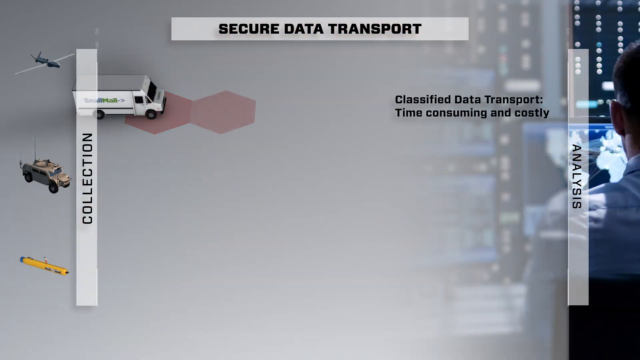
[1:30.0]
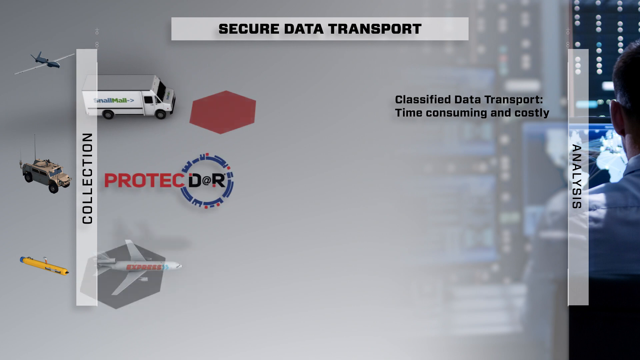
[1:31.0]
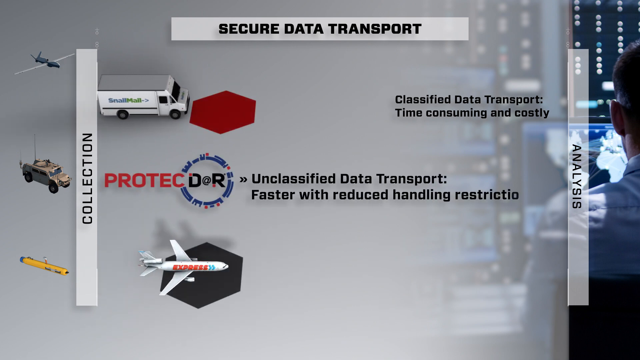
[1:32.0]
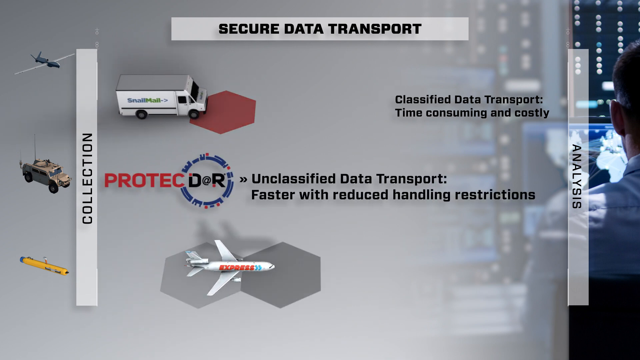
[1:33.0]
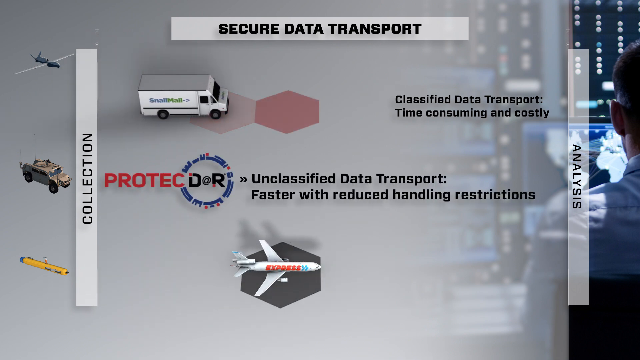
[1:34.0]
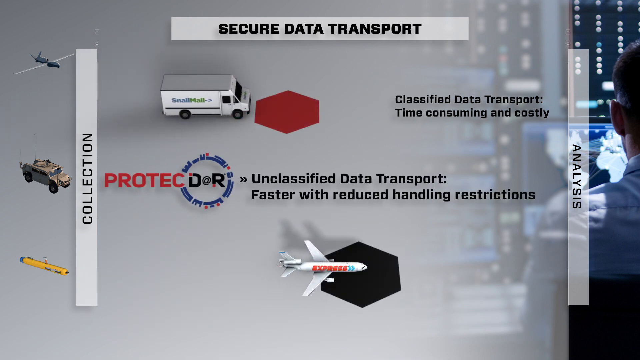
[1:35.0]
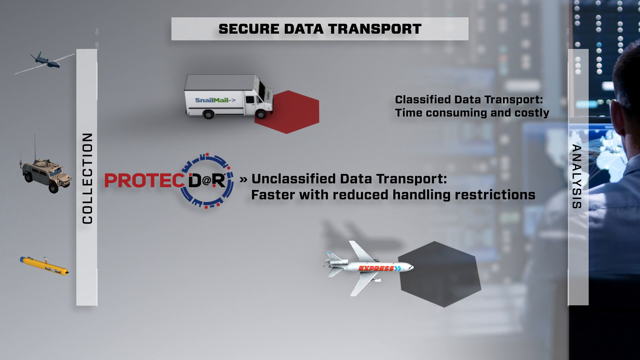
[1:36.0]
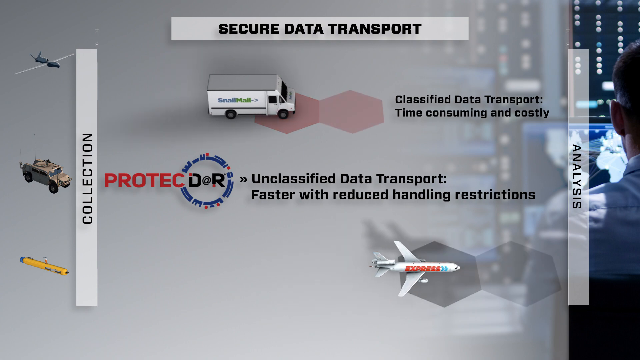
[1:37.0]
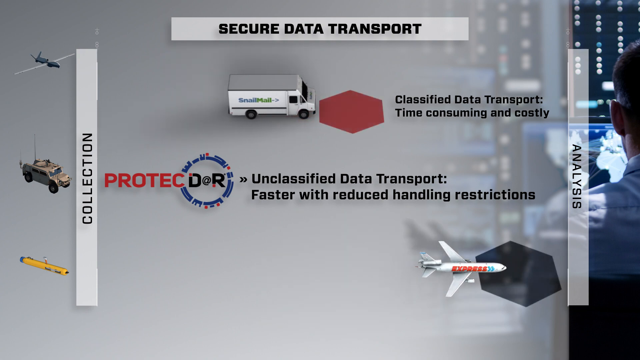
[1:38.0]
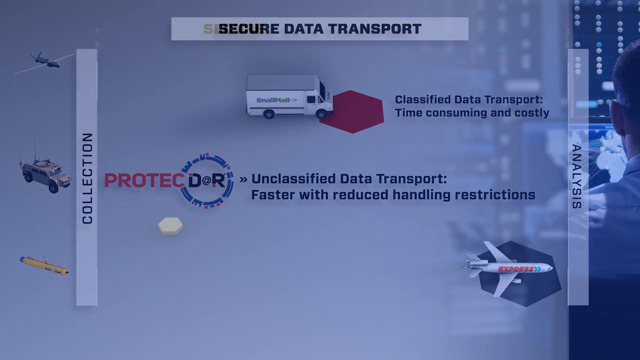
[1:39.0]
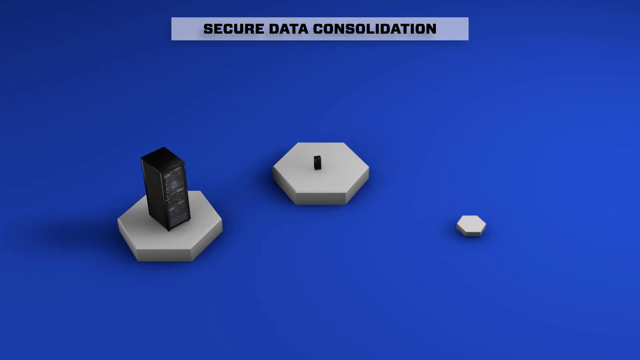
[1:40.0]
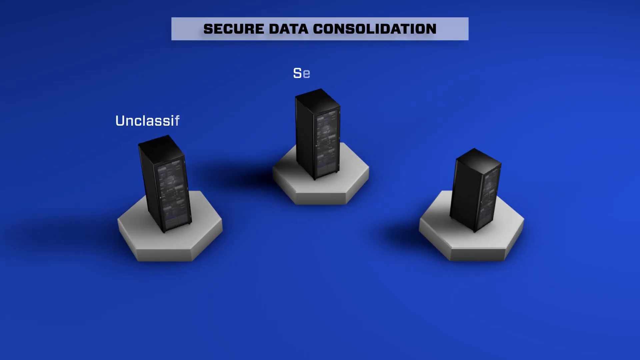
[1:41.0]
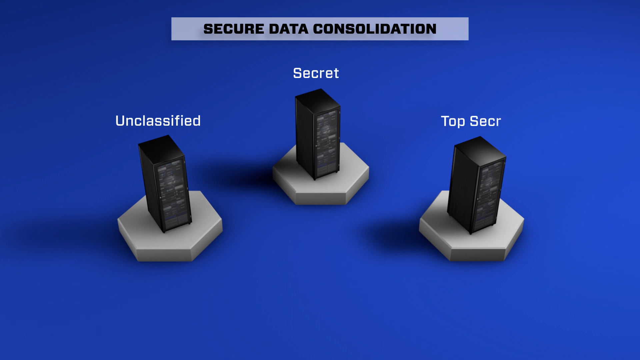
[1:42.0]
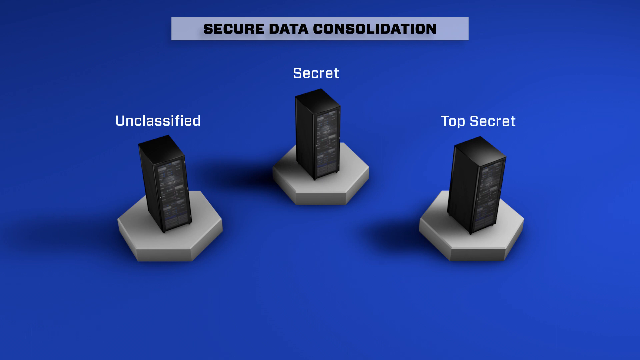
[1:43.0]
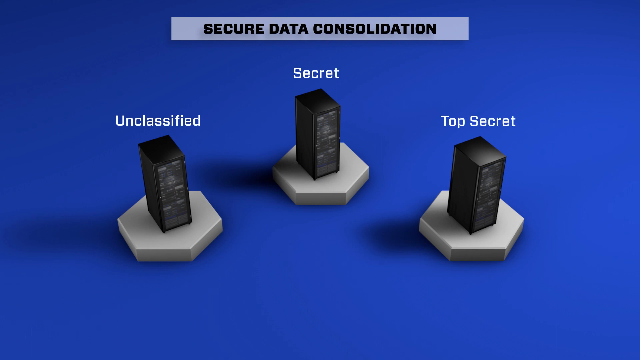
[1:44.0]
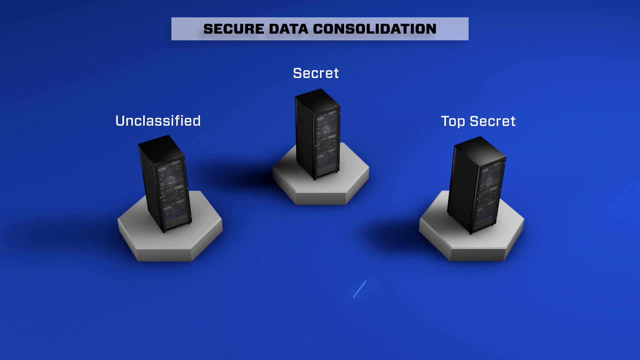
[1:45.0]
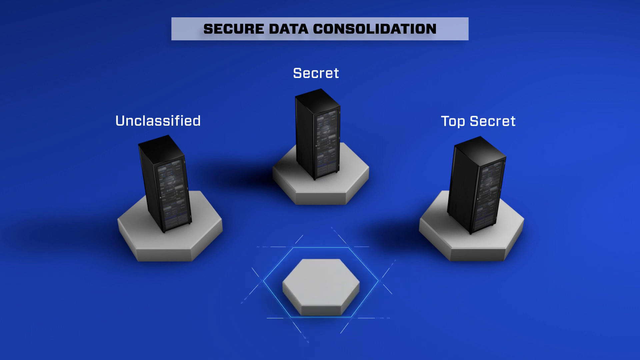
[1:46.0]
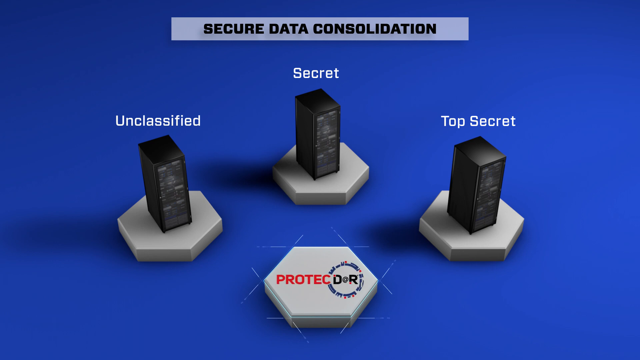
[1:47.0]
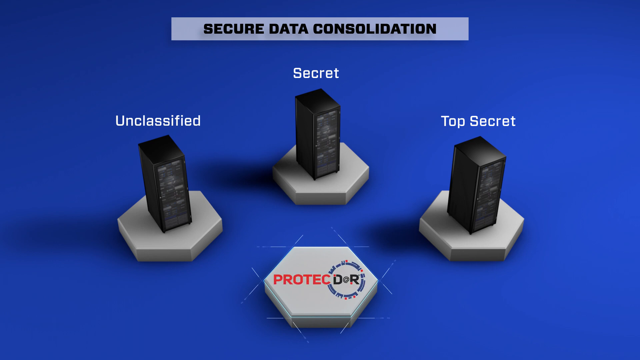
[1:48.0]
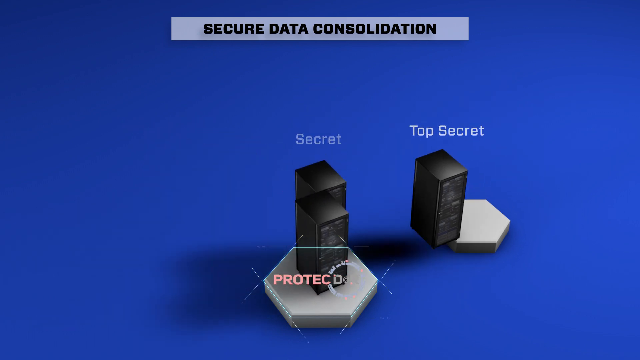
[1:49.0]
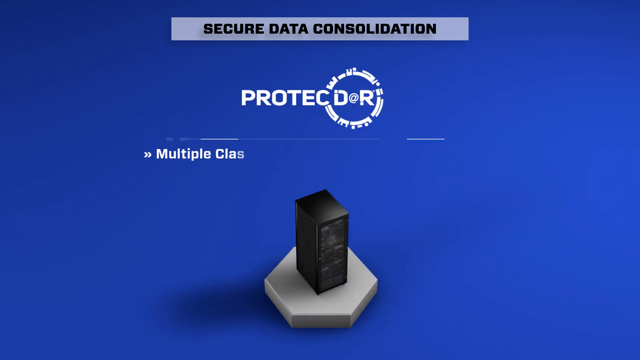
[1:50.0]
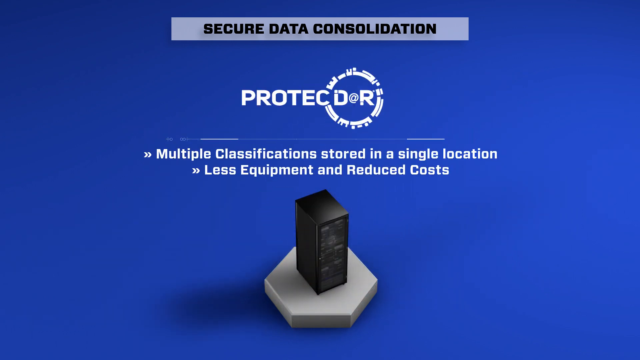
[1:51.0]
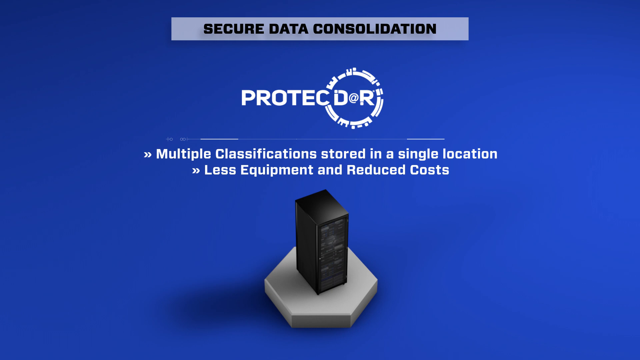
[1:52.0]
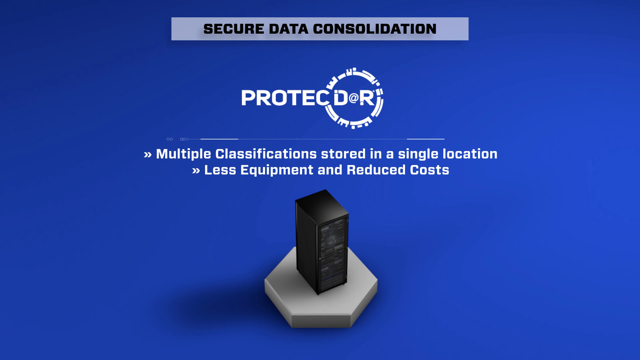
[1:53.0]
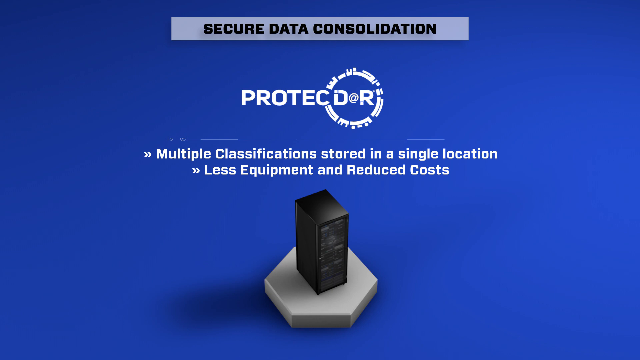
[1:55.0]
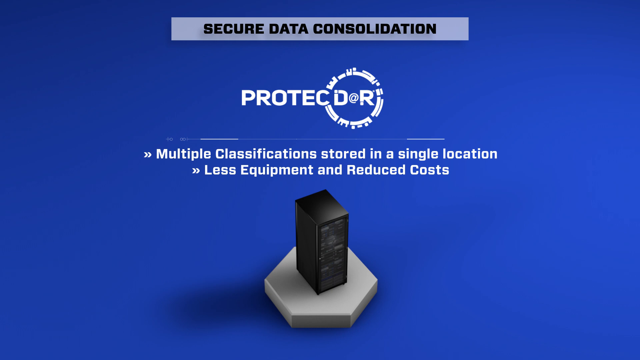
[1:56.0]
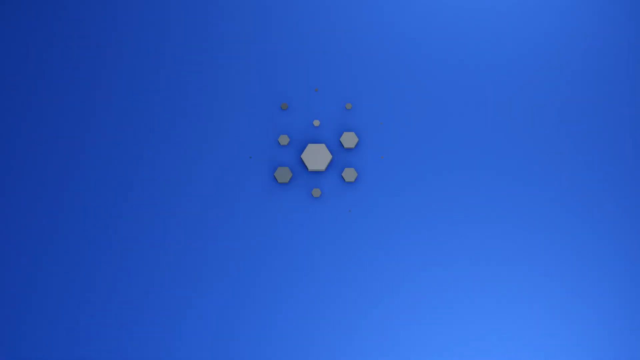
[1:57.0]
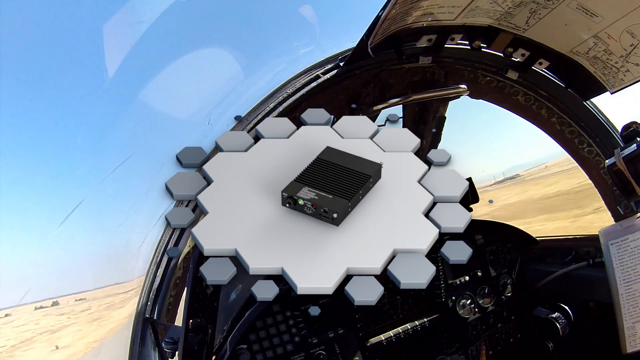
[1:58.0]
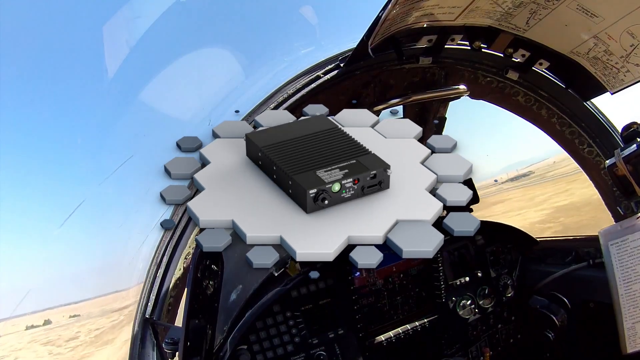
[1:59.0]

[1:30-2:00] Another animation shows what looks to be some sort of race. At the far left is a line labeled "collection," and from top to bottom there are an airplane, a truck, and some sort of yellow stick, possibly a submarine. The objects appear to move from the collection line toward the analysis line, and the truck seems to be the slowest. Between the airplane and the truck is the ProtectDor logo with the text "unclassified data transport, faster with reduced handling restrictions."